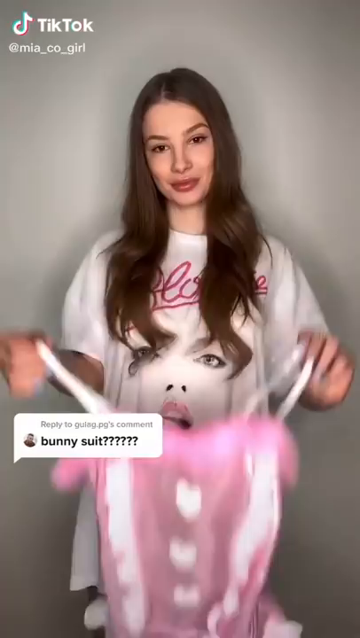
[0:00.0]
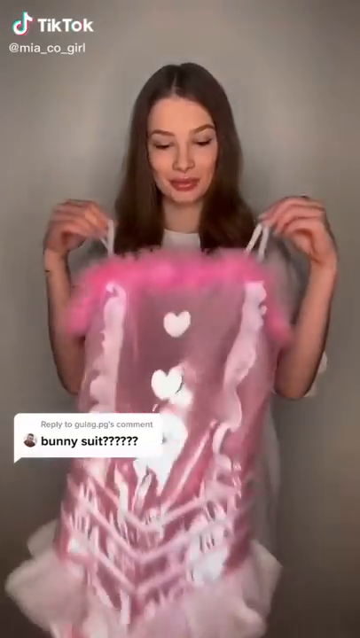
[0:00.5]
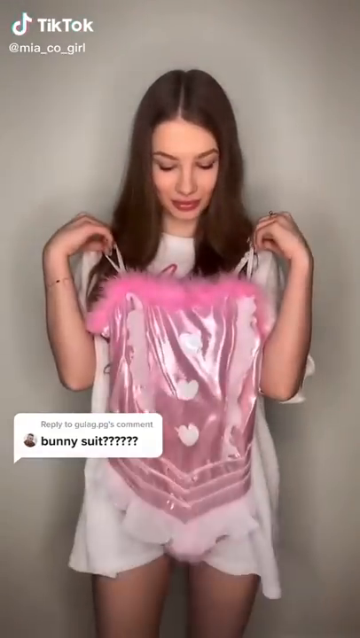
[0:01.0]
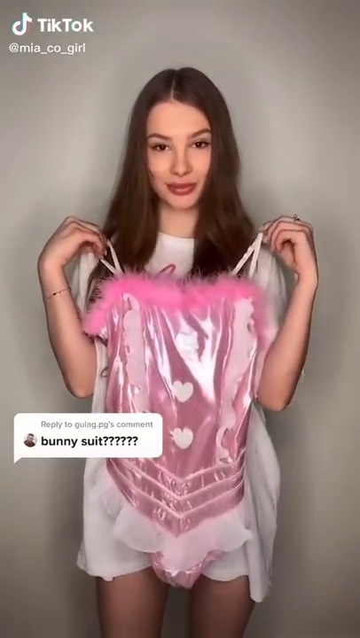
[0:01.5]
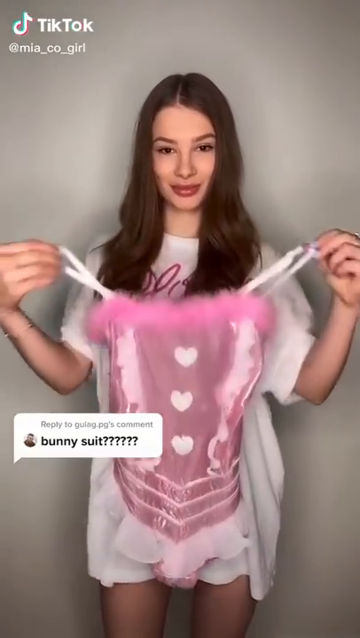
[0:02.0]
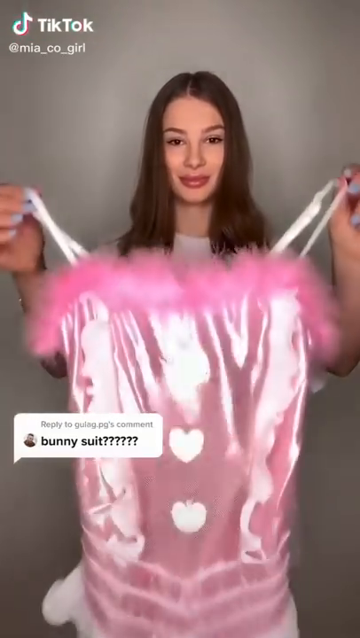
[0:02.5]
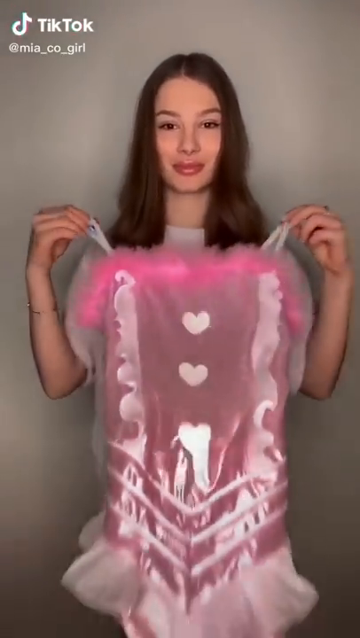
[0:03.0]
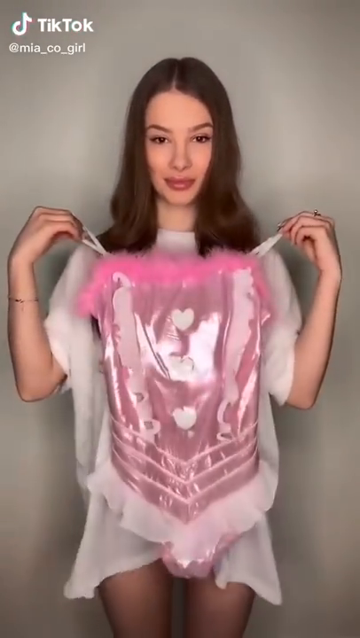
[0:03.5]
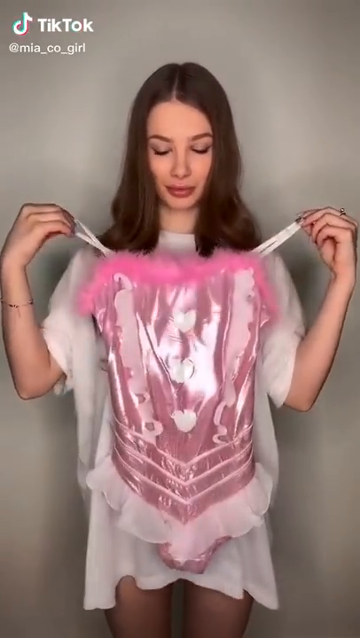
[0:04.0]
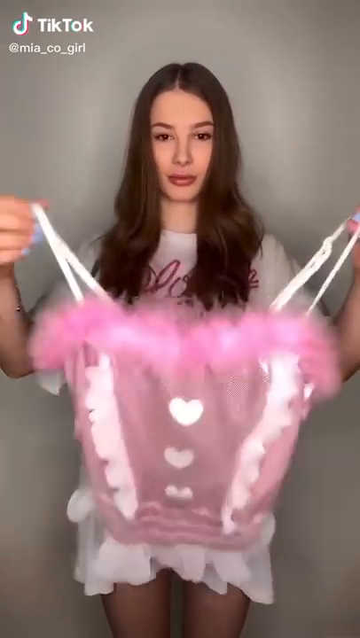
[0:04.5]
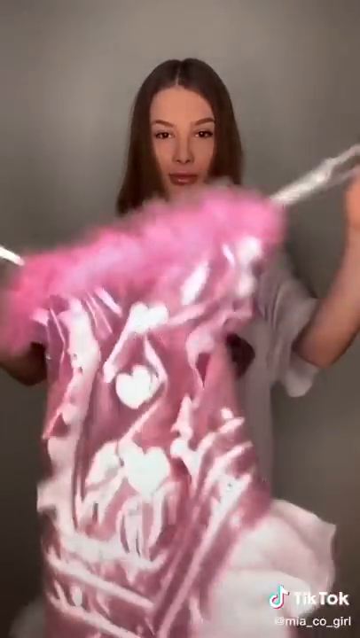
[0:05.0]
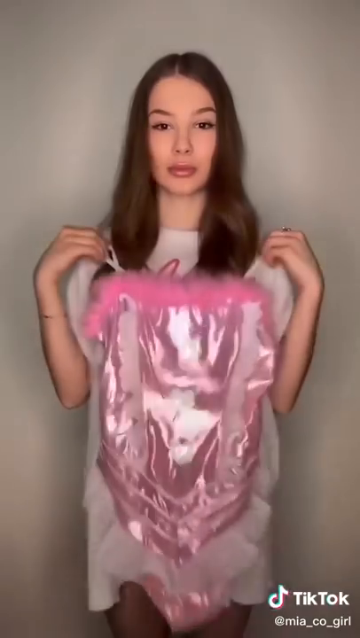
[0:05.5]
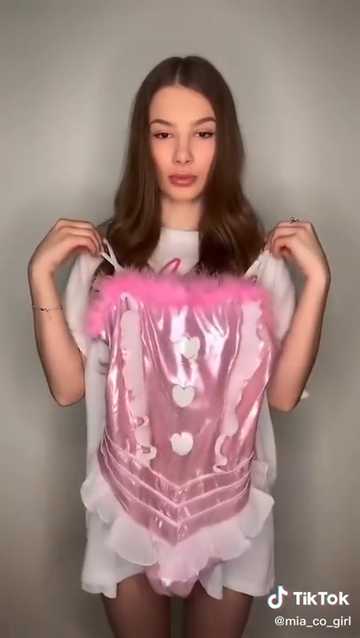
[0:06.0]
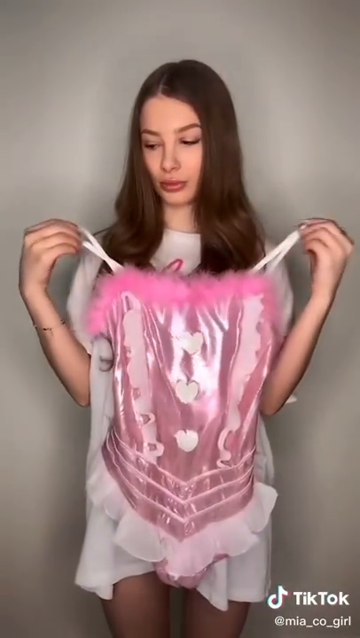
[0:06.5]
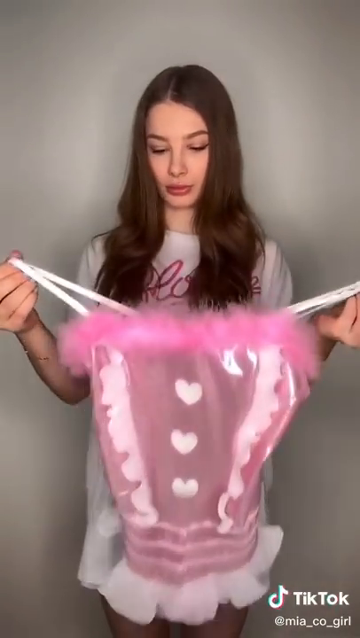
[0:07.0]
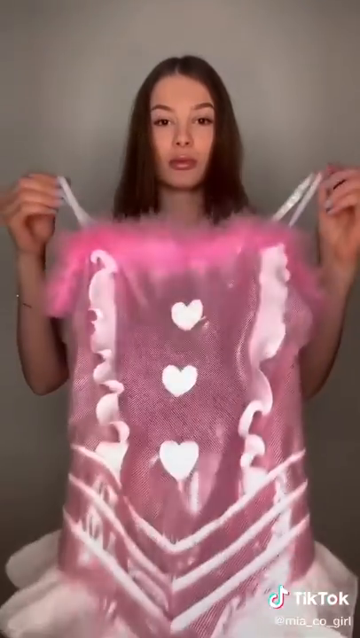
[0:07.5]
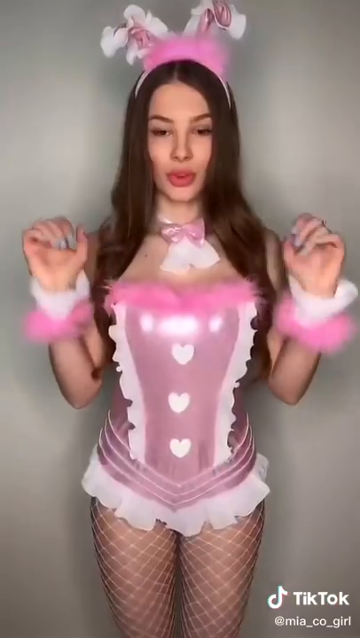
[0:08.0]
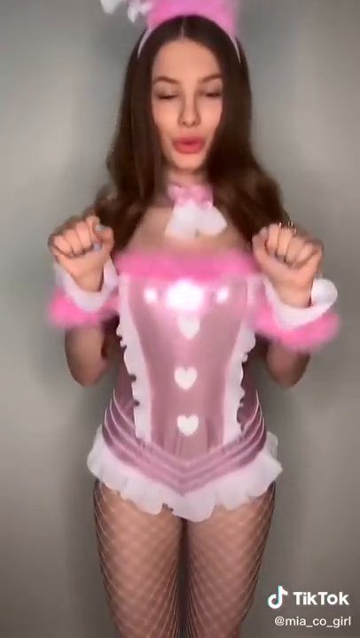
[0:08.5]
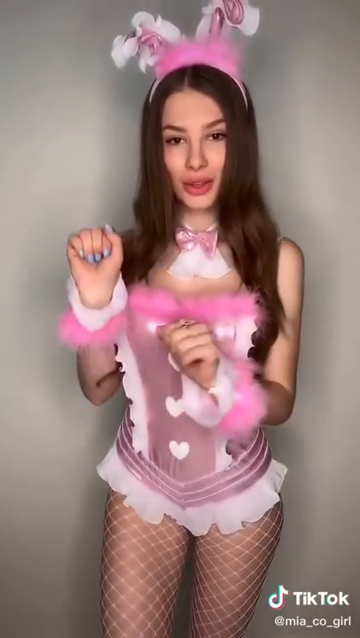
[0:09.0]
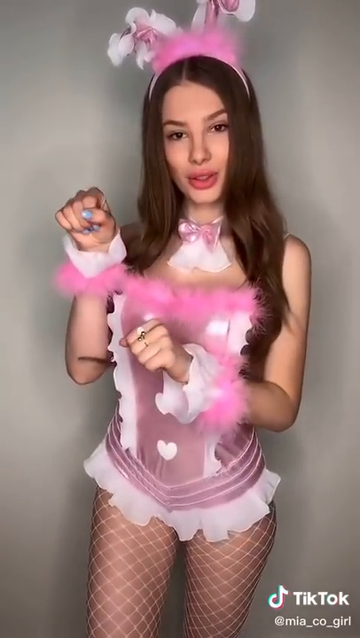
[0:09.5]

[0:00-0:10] A woman in a white t-shirt, seen from the front, has part of a costume; she appears to be holding it up by the strings where her torso is. She has longer black hair and is standing in front of a gray wall, with a slight shadow around her. A comment on the left says "bunny suit??????", and on the top left "tik-tok" and "mia_co_girl" appear in white text. She shows the camera the costume piece from a close-up perspective: it is overall pink, with three white hearts going down the center. She shows it off some more, and then the video cuts to her wearing the costume, with a pink bowtie around her neck and what looks like bunny ears at the top. It turns out to be a bunny costume, just as the comment said.